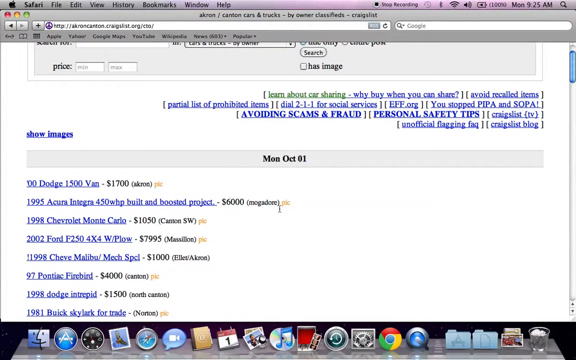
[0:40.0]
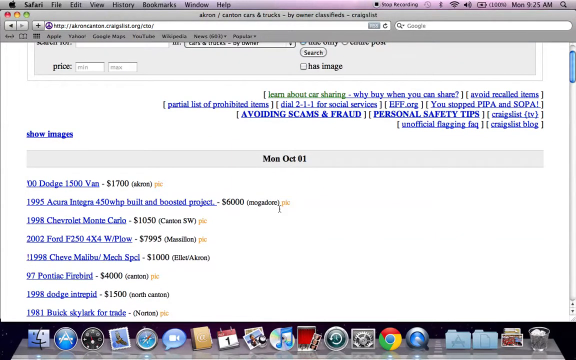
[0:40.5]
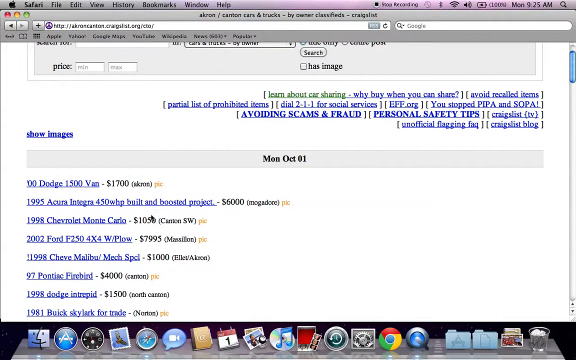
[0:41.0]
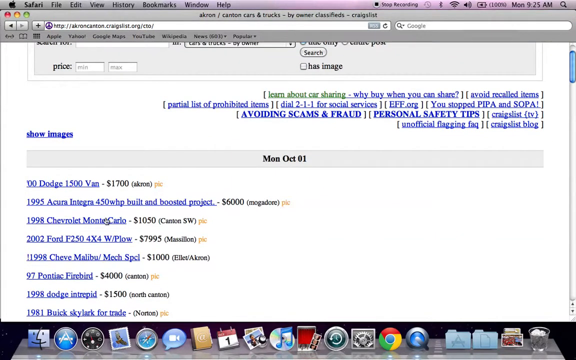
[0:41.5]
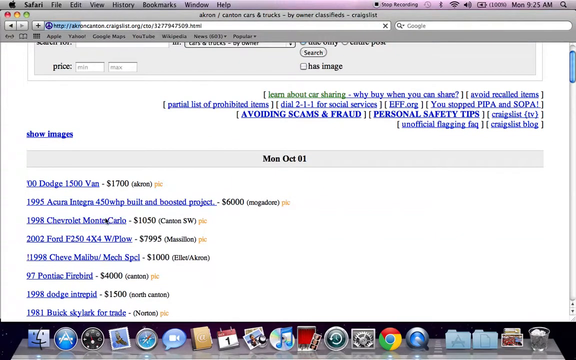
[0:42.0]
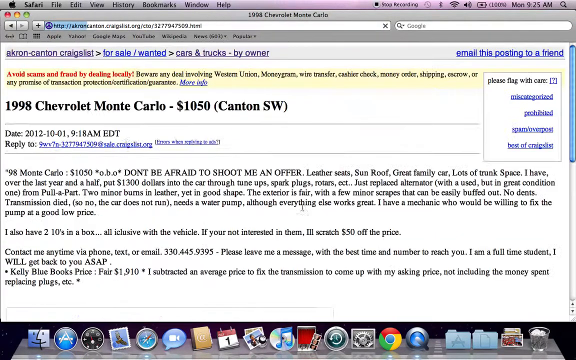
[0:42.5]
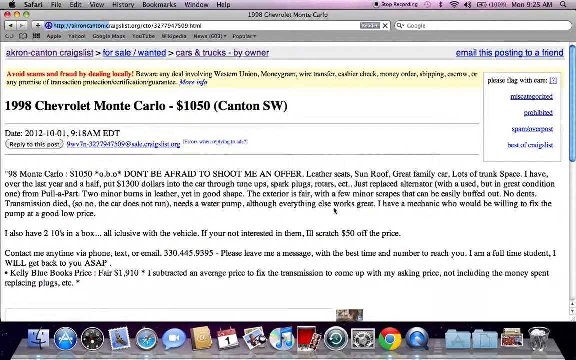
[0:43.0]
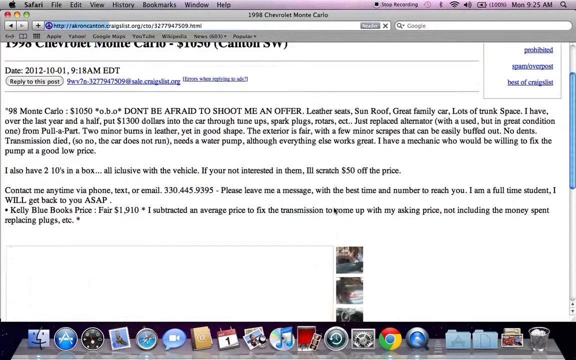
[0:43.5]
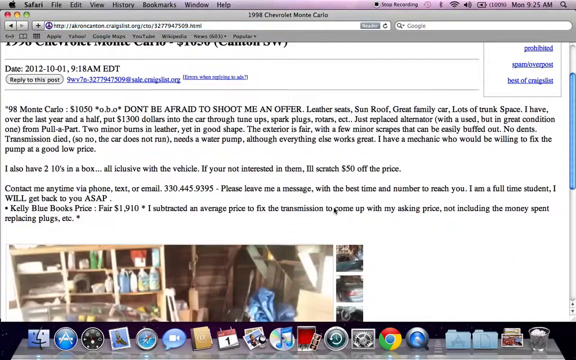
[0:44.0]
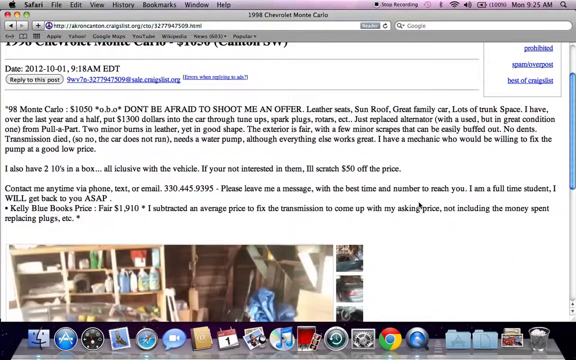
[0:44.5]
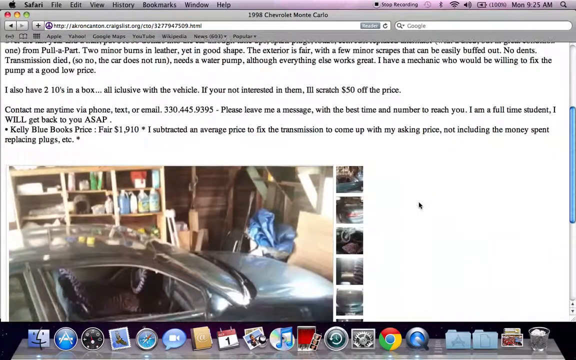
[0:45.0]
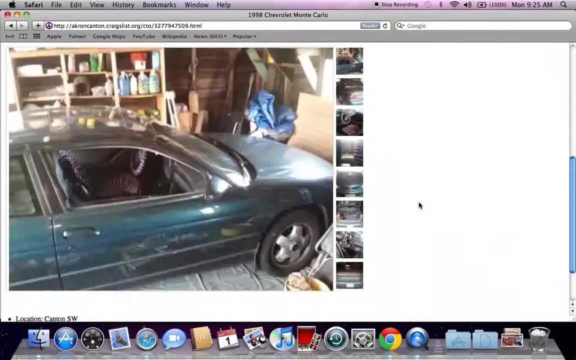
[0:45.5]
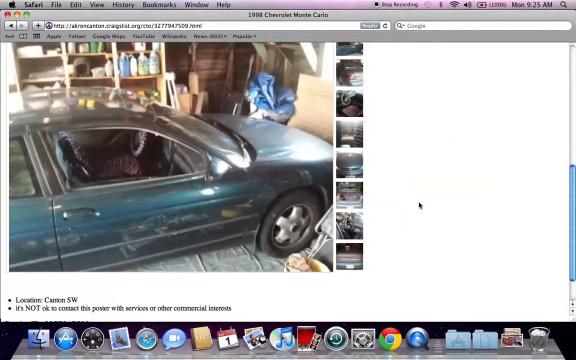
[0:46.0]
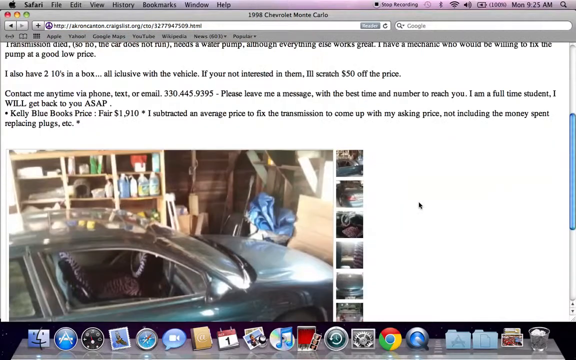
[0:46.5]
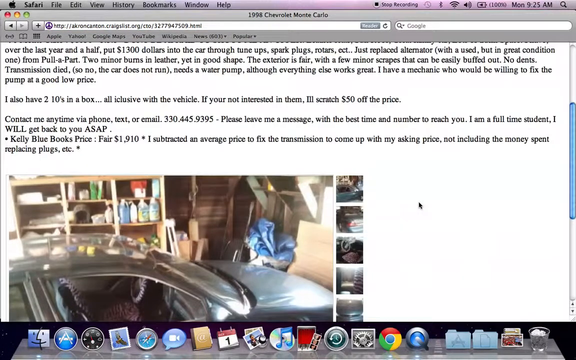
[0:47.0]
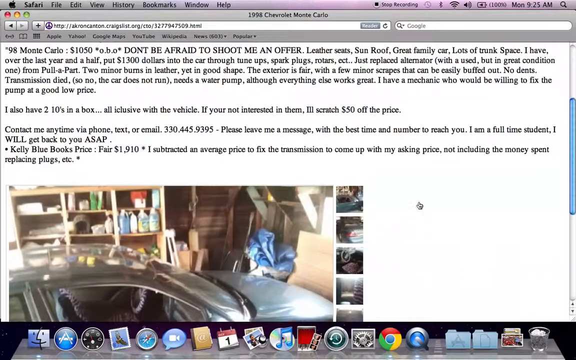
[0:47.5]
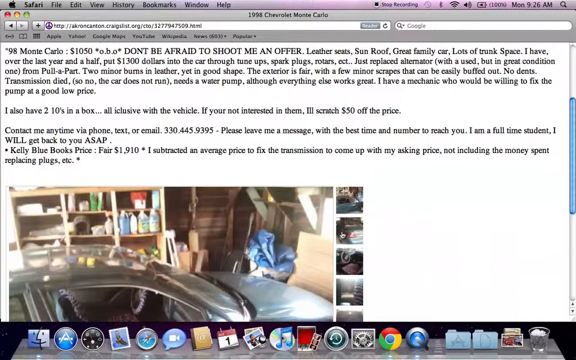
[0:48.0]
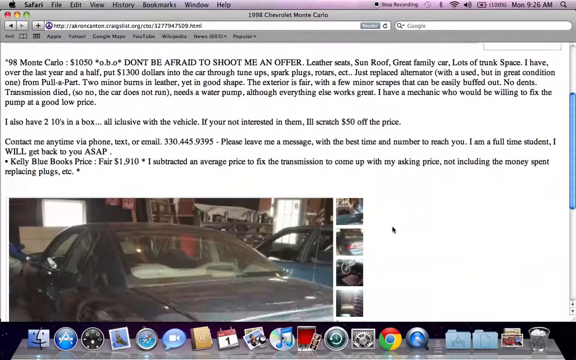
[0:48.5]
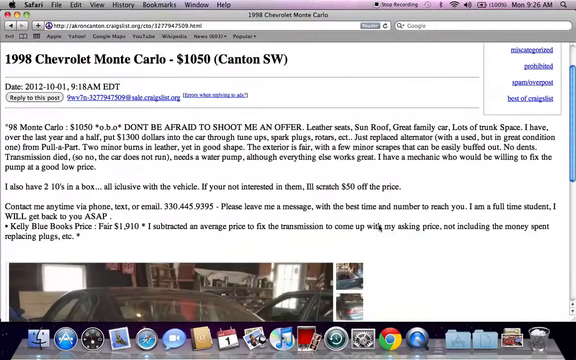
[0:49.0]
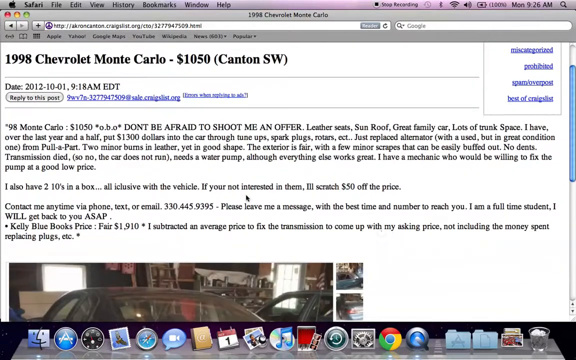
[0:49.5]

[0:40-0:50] A live view of someone's computer screen shows Craigslist. Near the top, a green underlined link says "learn about car sharing", which then turns blue and says "why buy when you can share", along with some other links. To the left is a link that says "show images". A very light blue bar runs across the page containing the date "Mon Oct 01", and below it is a left-justified list of cars. The person apparently clicks the third one down, "1998 Chevrolet Monte Carlo", a blue link with "$1,050" to its right. The listing opens: in big black letters at the top it reads "1998 Chevrolet Monte Carlo - $1050" with "(Canton SW)" in parentheses, and underneath are the date "2012-10-01" and the time "9:18 a.m. EDT", followed by a "reply to this post" button. The page is scrolled a little to show more of the description, which reads "98 Monte Carlo $1050 don't be afraid to shoot me an offer leather seats sunroof great family car lots of trunk space i have over the last year and a half put thirteen hundred dollars into the car through tune-up spark plugs rotors etc just replaced alternator with the used but in great condition one from pull apart two minor burns and leather yet in good shape". Scrolling down then reveals the car itself, which does not look nice: it is in a garage with sunlight shining in, a dark teal green color, with a whole bunch of scratches and marks all over its side.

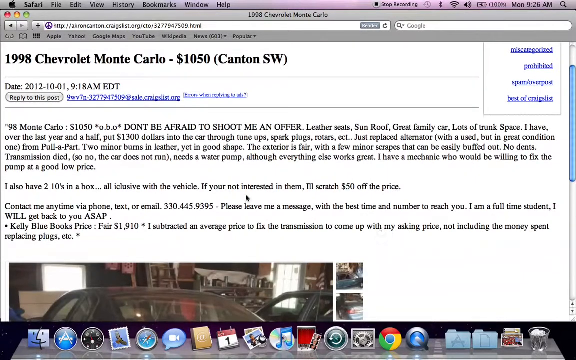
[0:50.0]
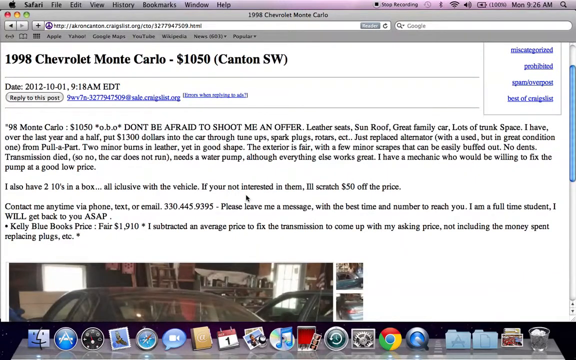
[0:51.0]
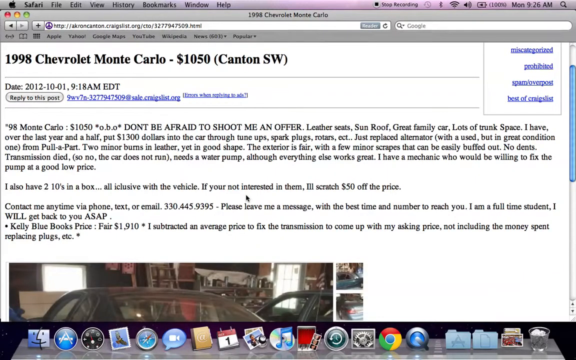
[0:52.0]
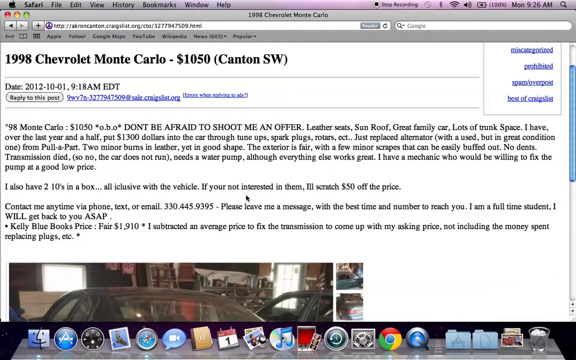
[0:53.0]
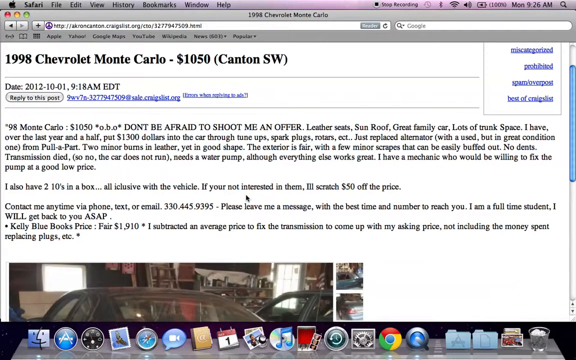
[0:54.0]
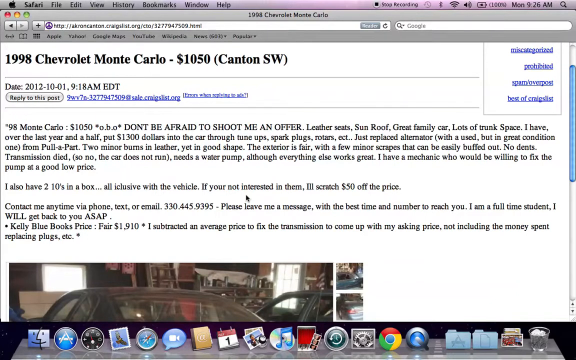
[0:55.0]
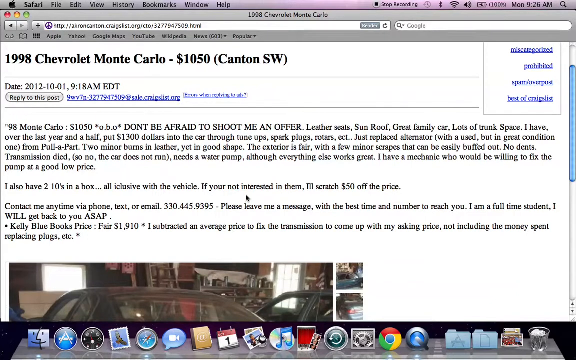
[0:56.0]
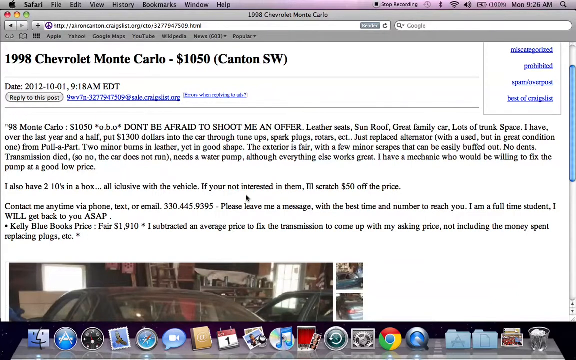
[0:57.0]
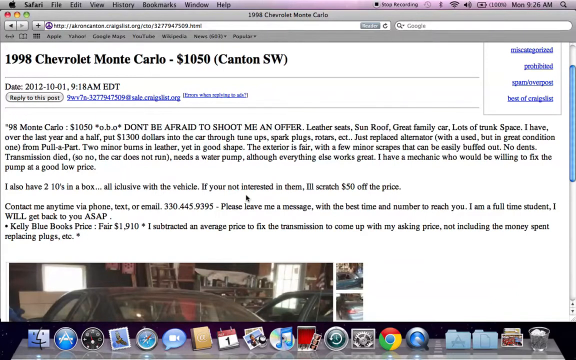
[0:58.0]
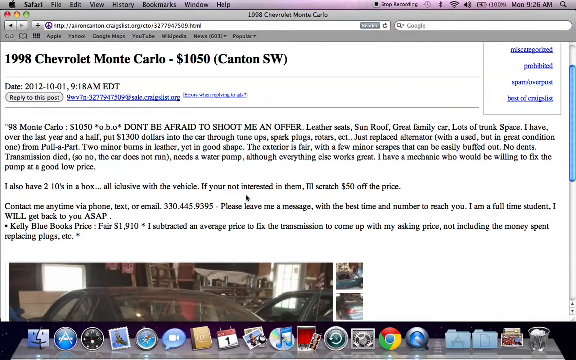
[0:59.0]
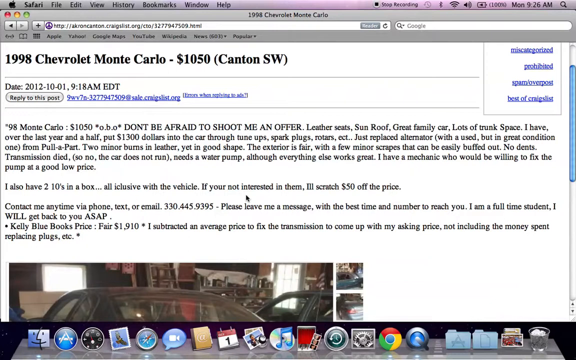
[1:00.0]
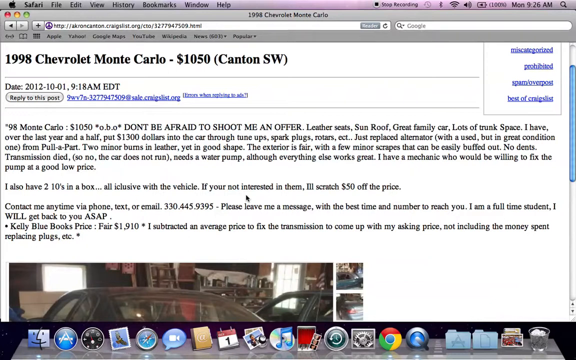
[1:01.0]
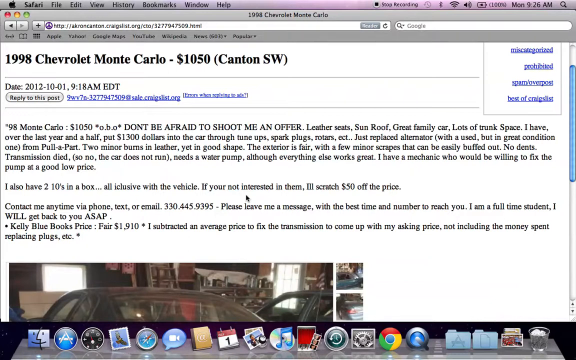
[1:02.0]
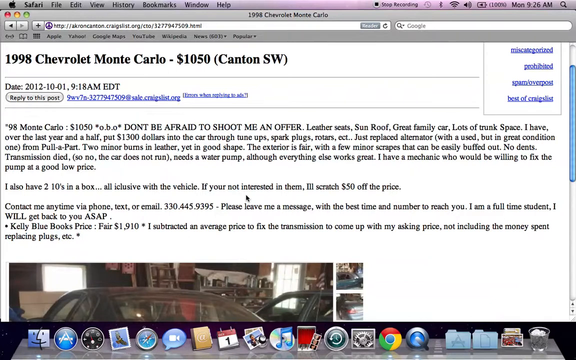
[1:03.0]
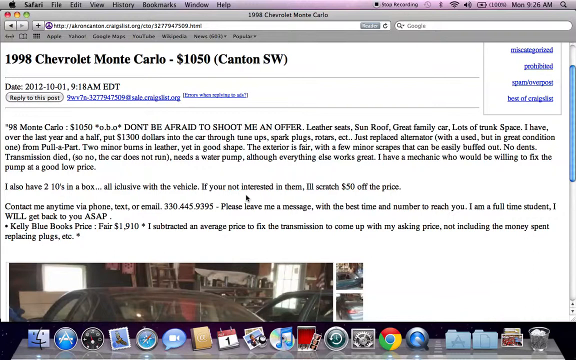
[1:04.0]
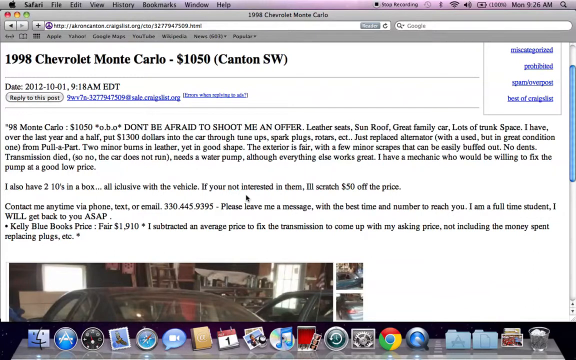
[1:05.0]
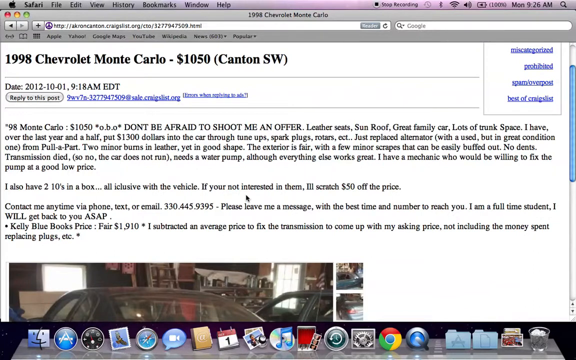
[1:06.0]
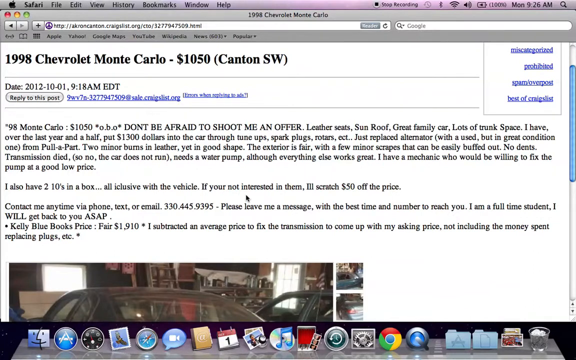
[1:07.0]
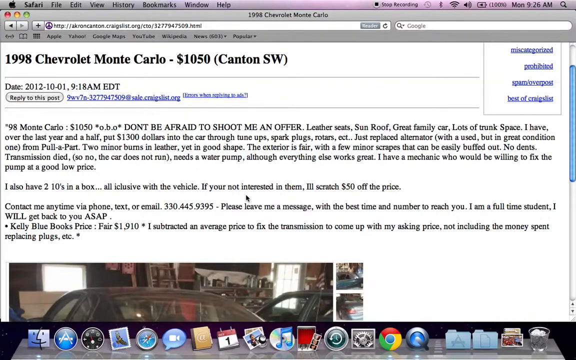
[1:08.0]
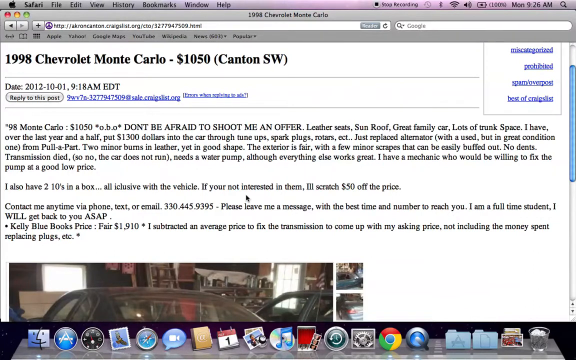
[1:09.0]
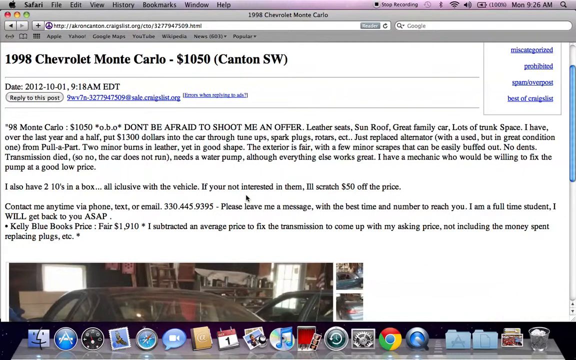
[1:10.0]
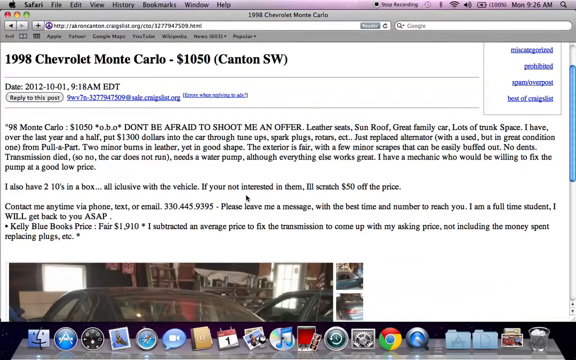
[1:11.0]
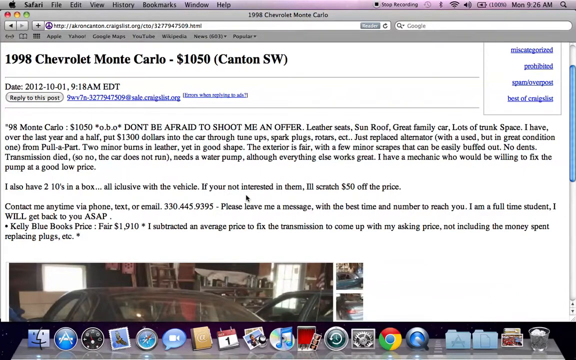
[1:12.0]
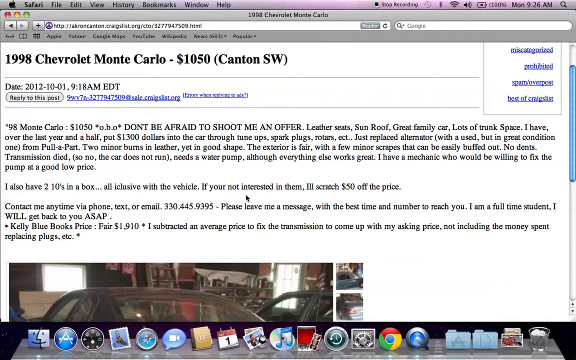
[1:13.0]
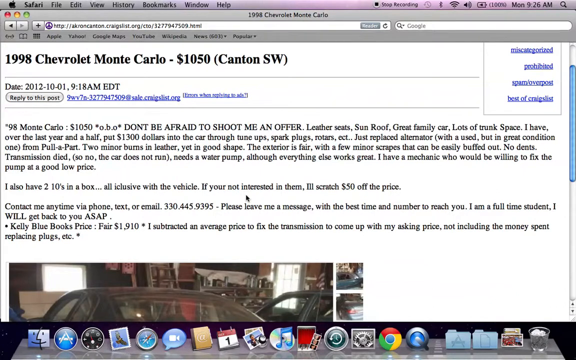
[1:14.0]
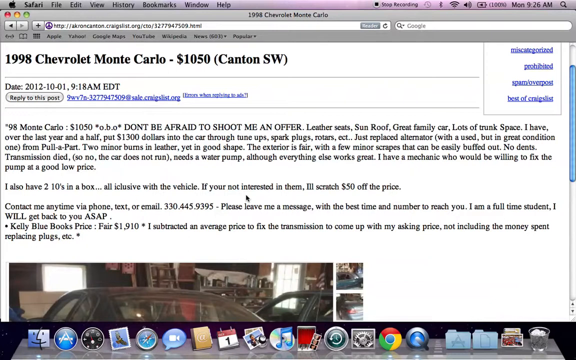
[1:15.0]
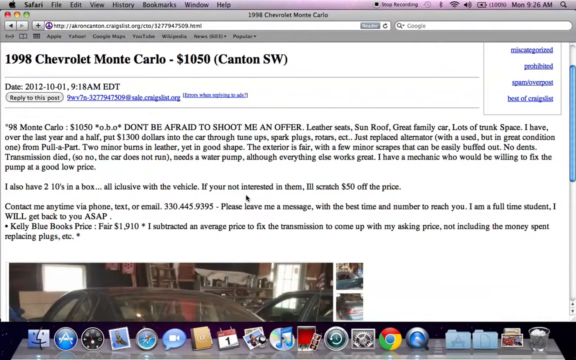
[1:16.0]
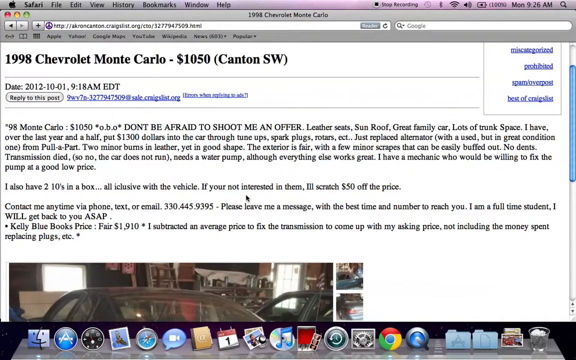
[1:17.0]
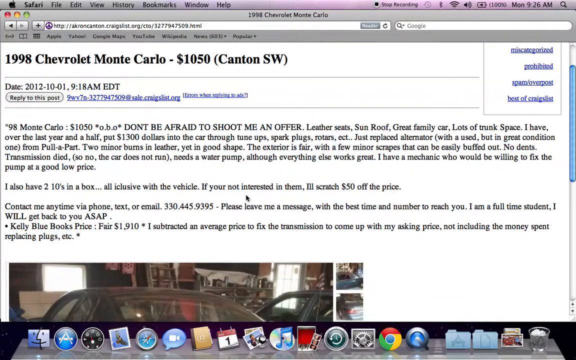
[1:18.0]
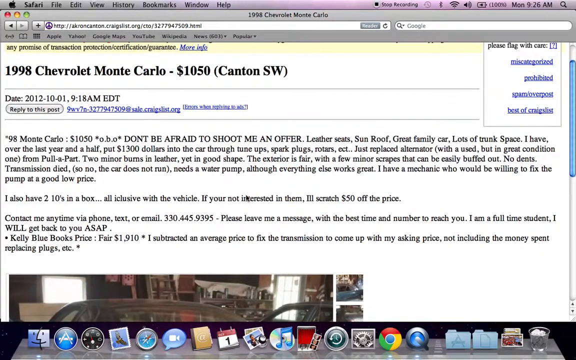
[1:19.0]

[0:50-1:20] A Craigslist listing is open on someone's computer screen. At the top it reads "1998 Chevrolet Monte Carlo - $1050" with "(Canton SW)" in parentheses. The main listing reads "98 Monte Carlo $1050 *o.b.o*", followed in capital letters by "don't be afraid to shoot me an offer". In regular letters it continues: "leather seats, sunroof, great family car, lots of trunk space. I have over the last year and a half put $1300 into the car through tune up spark plugs rotors ect.", with etc misspelled as "ect". It then reads "just replaced alternator (with a used but in great condition one) from pull apart. two minor burns and leather yet in good shape. The exterior is fair with a few minor scrapes that can be easily buffed out. No dents. Transmission died." In parentheses it says "so no, the car does not run", followed by "needs a water pump, although everything else works great. I have a mechanic who would be willing to fix the pump at a good low price." After a space it reads "I also have two tens in a box, all inclusive with the vehicle. If you're not interested in them, I'll scratch $50 off the price." Then "contact me any time via phone, text, or email" appears with the phone number 330-445-9395, and the text continues "please leave me a message with the best time and number to reach you. I am a full-time student. I will get back to you as ASAP."